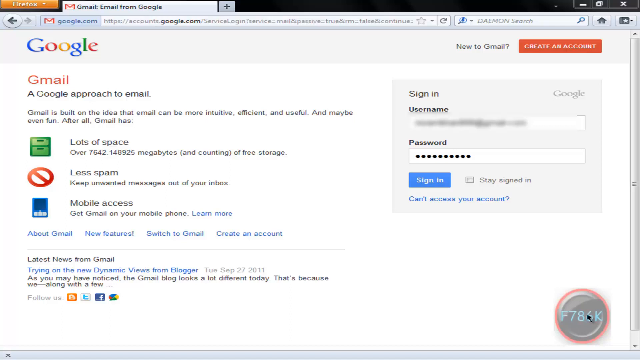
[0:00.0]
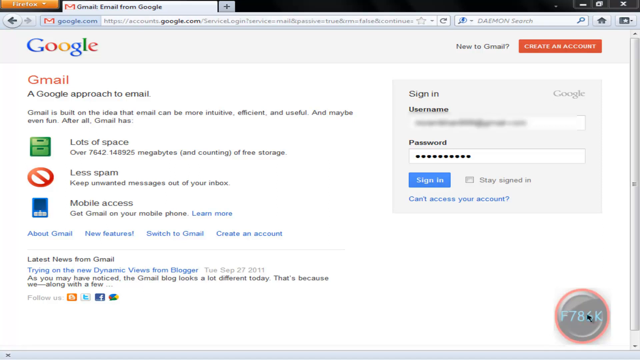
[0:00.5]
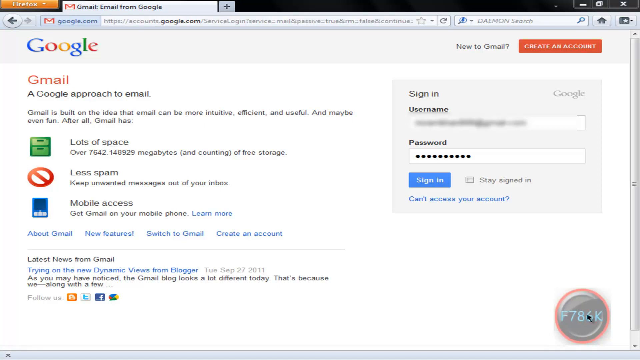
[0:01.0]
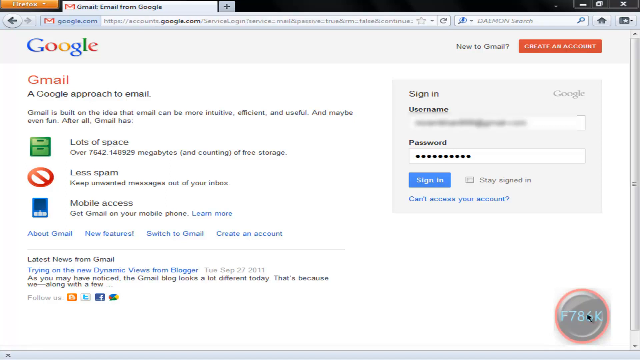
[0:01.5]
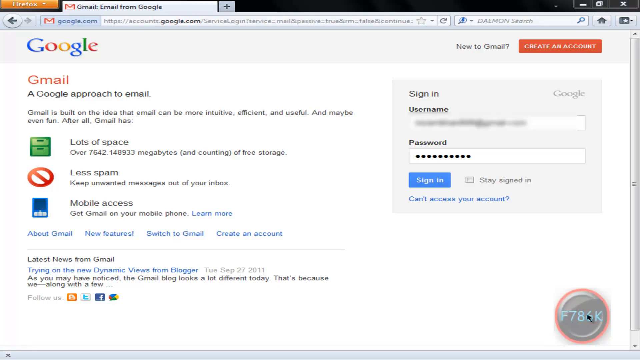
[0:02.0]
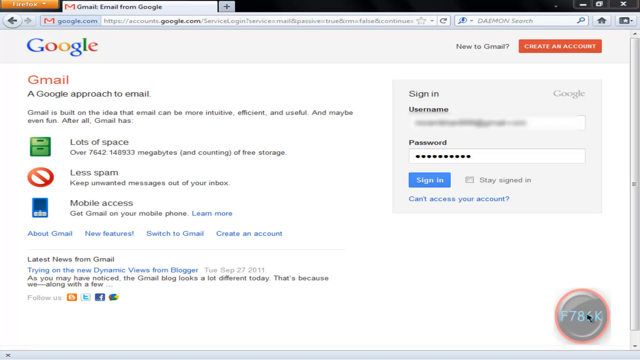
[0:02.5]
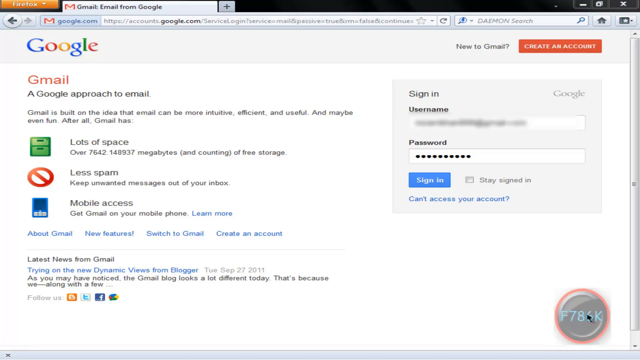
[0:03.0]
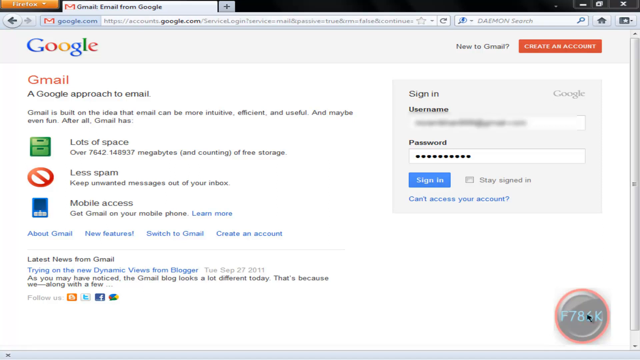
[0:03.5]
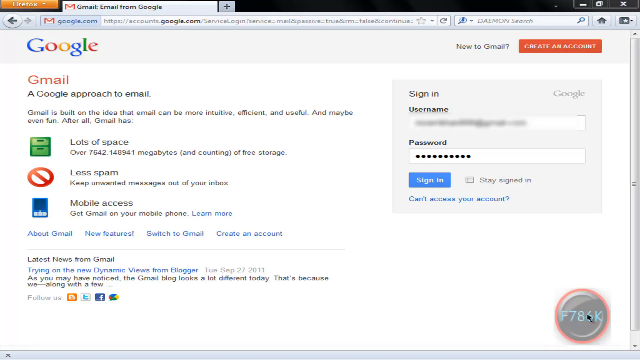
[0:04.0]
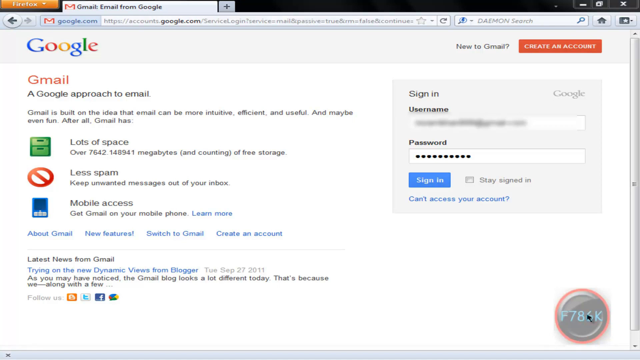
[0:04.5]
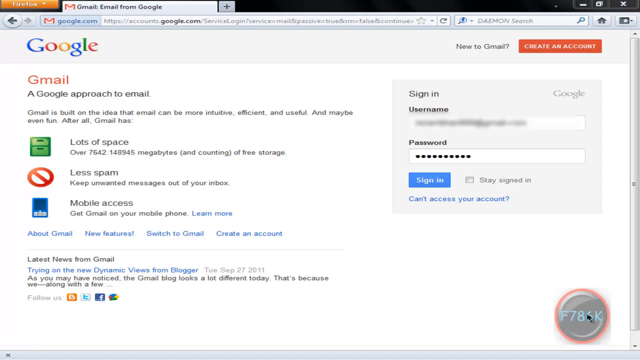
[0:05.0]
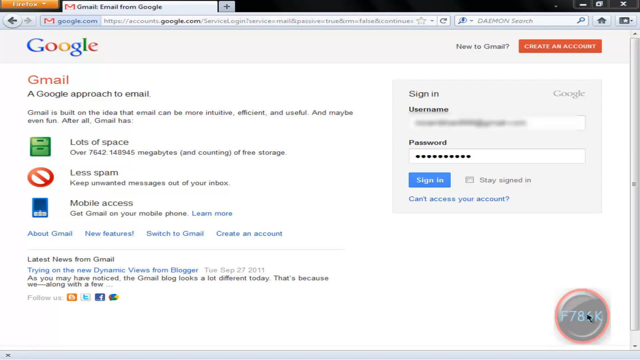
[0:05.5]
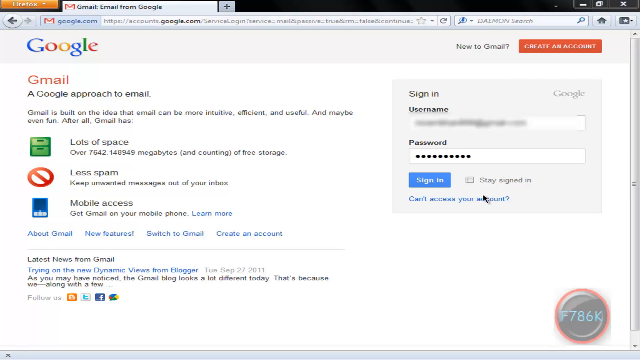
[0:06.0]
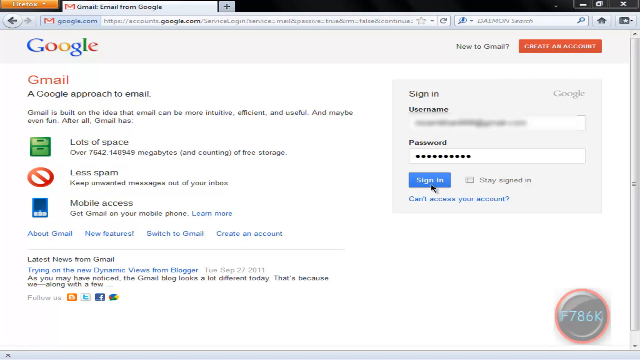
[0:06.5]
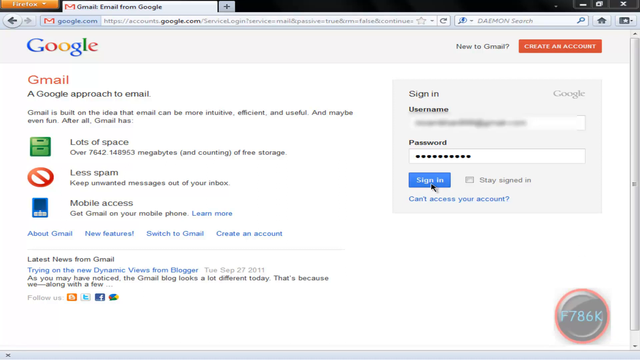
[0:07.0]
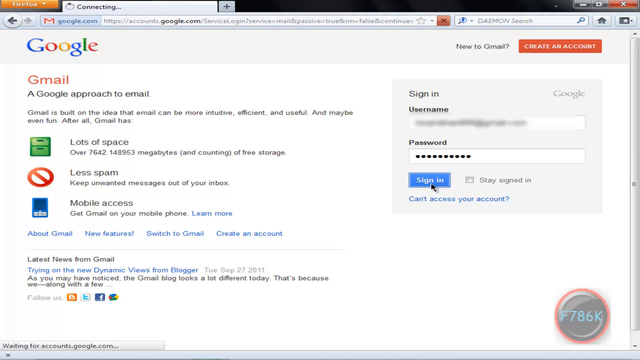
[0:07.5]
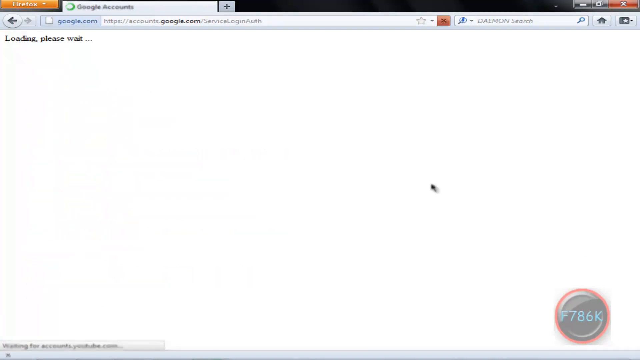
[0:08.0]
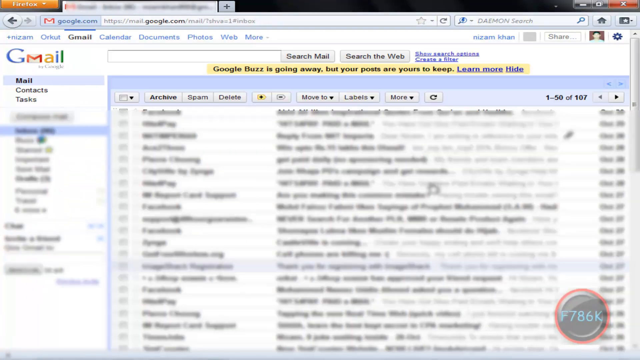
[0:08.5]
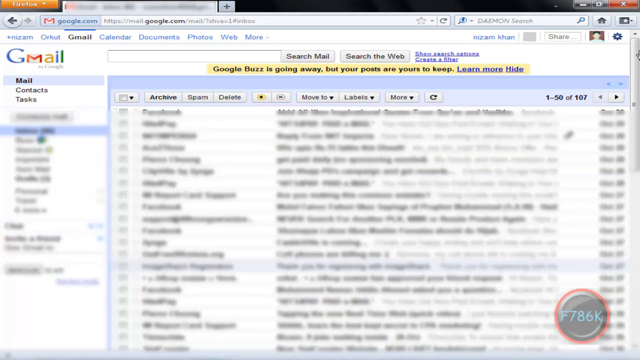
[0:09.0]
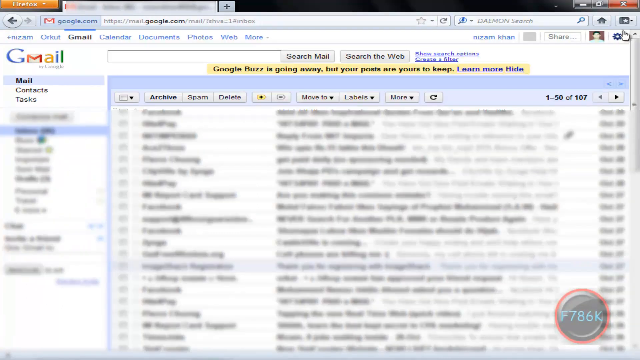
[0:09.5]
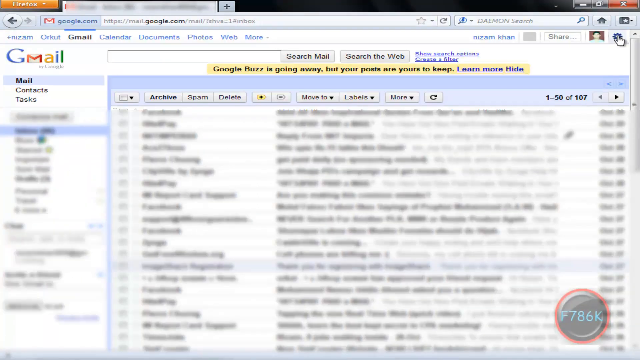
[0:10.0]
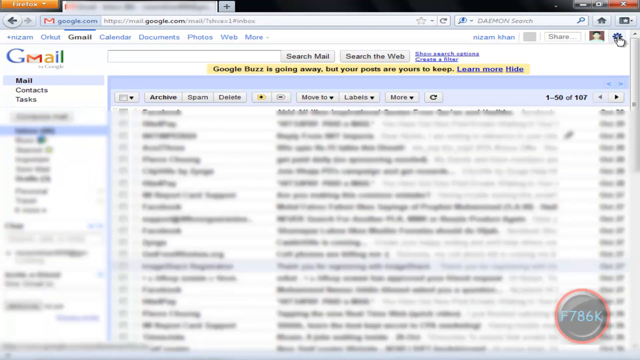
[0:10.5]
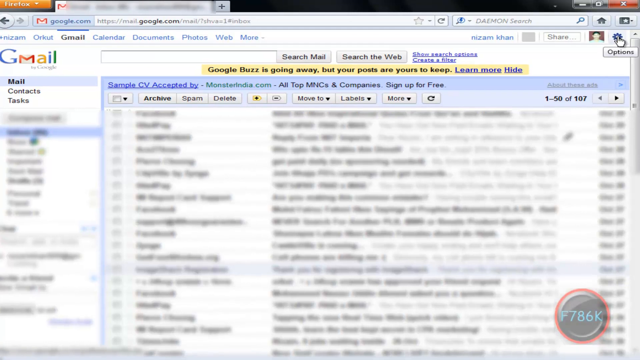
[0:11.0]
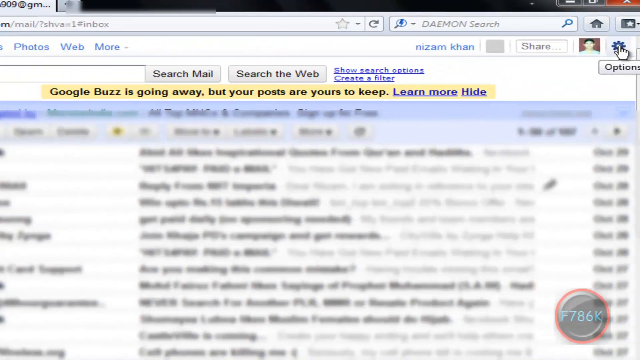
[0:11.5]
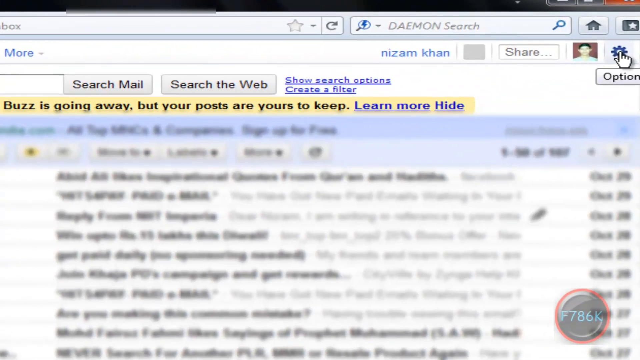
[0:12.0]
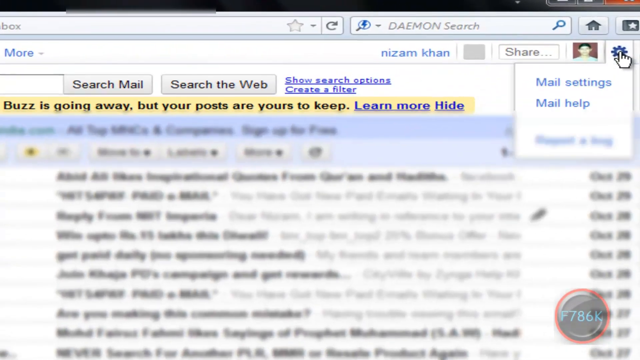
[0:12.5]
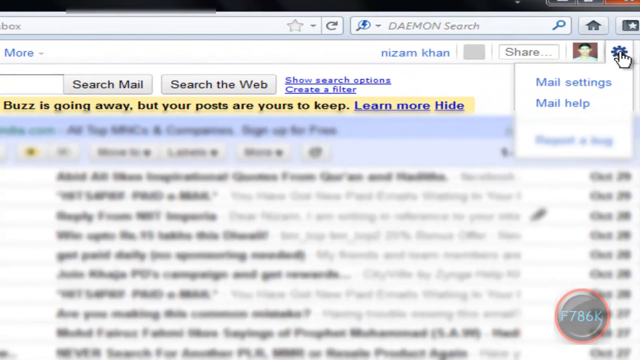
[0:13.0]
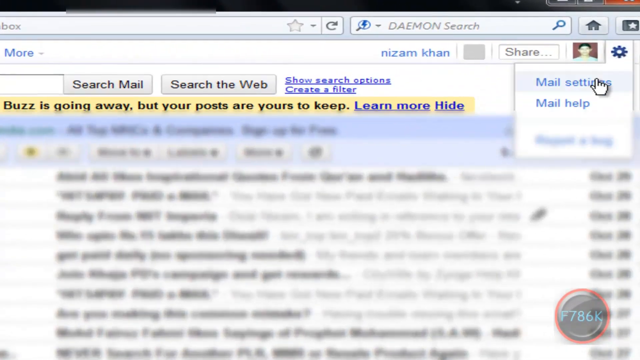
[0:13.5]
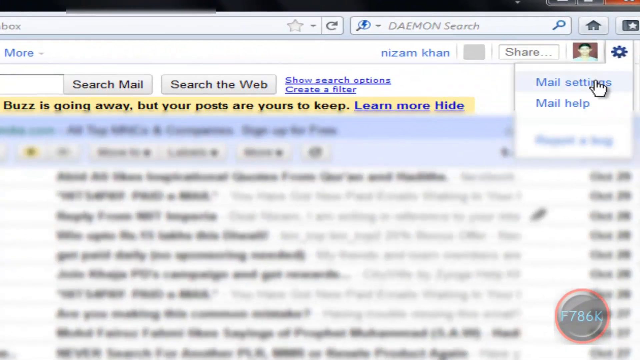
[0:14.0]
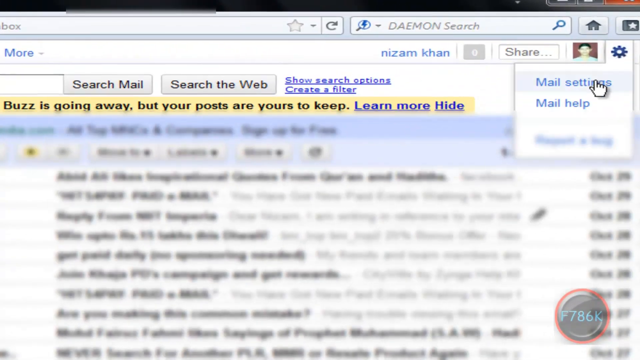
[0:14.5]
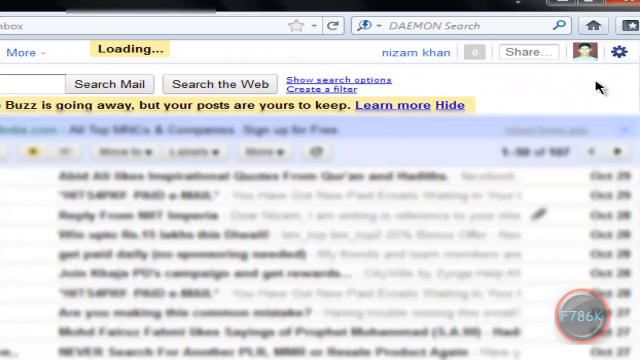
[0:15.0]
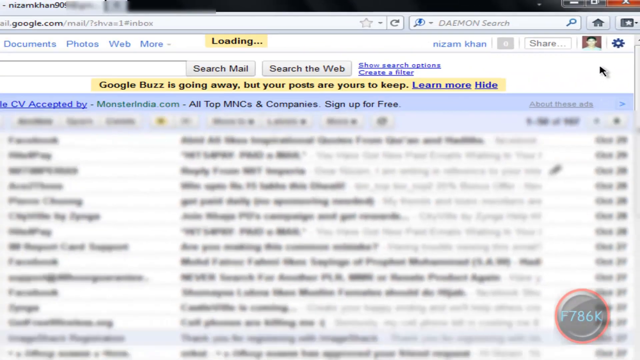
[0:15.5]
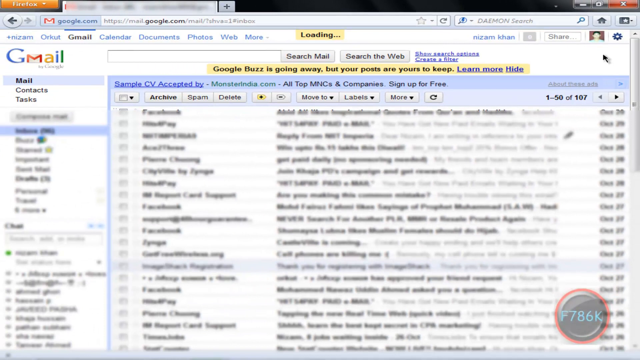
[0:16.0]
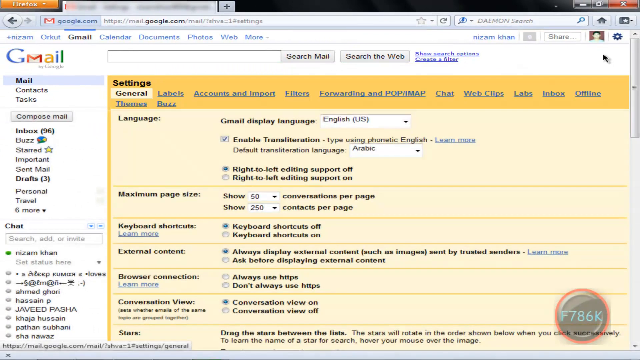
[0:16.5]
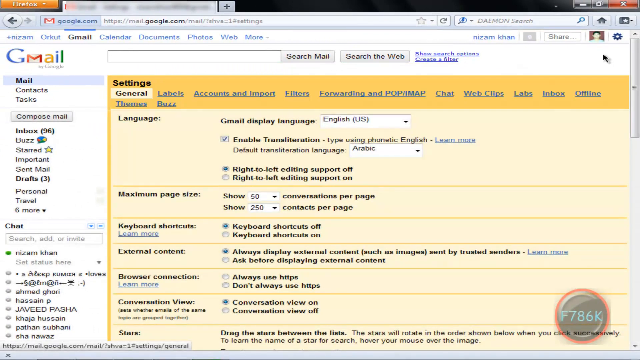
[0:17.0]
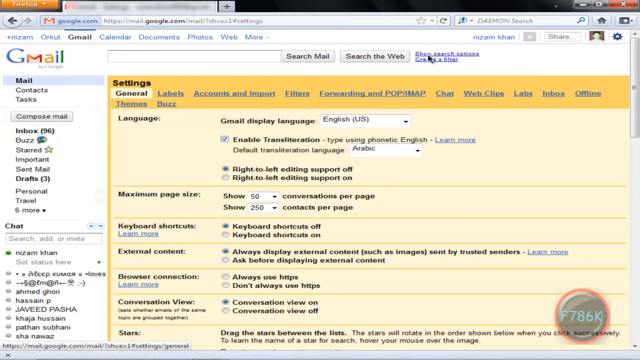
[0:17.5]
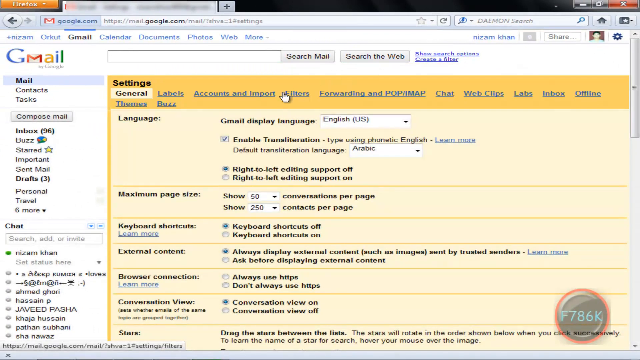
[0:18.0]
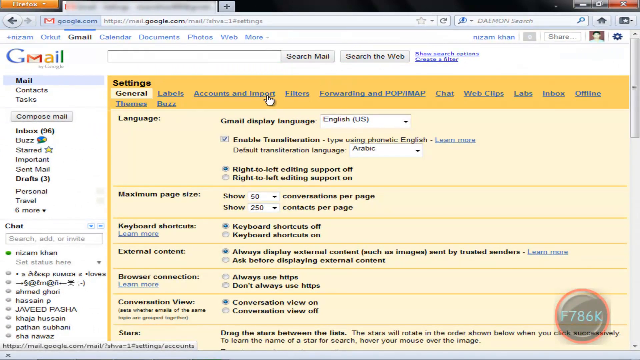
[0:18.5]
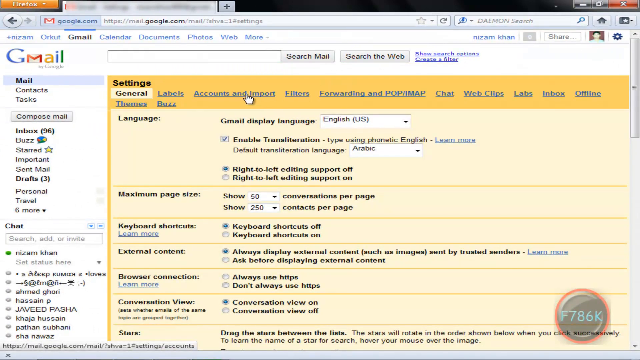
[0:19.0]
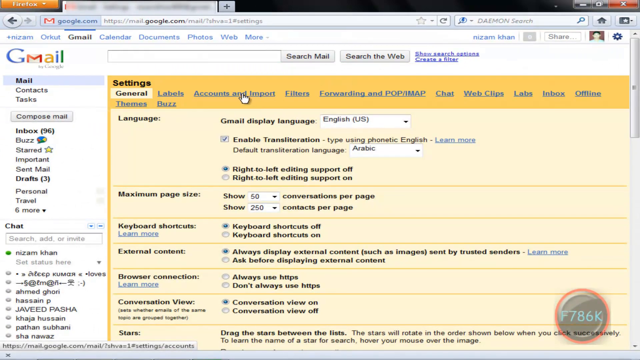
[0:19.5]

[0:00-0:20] Mozilla Firefox is open with one tab, loading Gmail's sign-in page. The username and password fields are populated; the password is automatically censored, while the username field has been blurred. The left part of the screen lists what Gmail can do and its benefits, including lots of space, less spam, and mobile access. The person recording clicks the blue sign in button below the username and password fields, and the page loads their inbox, which holds about 107 emails. All the inbox contents and the categories on the left side are blurred. The view zooms into the options cog icon at the top right, and the cursor hovers over it before clicking, revealing a dropdown with three options, only two of which can be seen: mail settings and mail help. They click mail settings, and a yellow box with black writing at the top middle of the page says "loading". A settings page replaces the inbox, and the cursor hovers over one of the options in the top navigation bar, the setting called accounts and import.